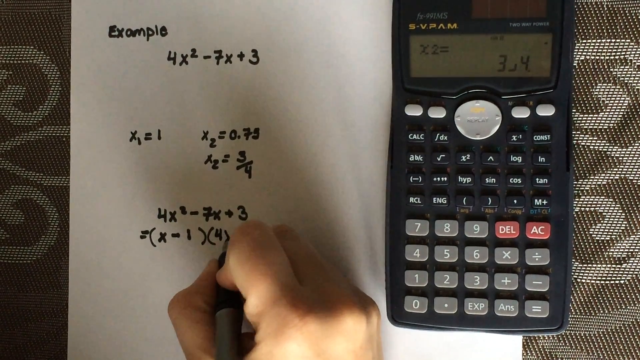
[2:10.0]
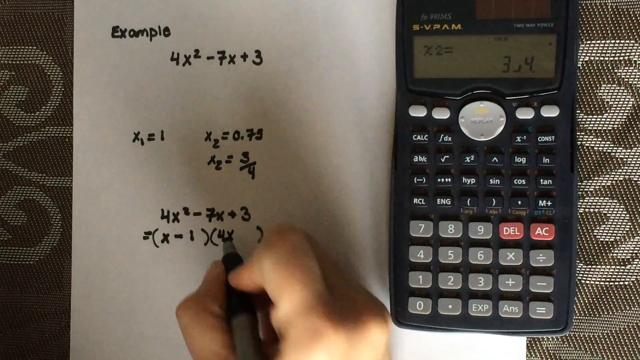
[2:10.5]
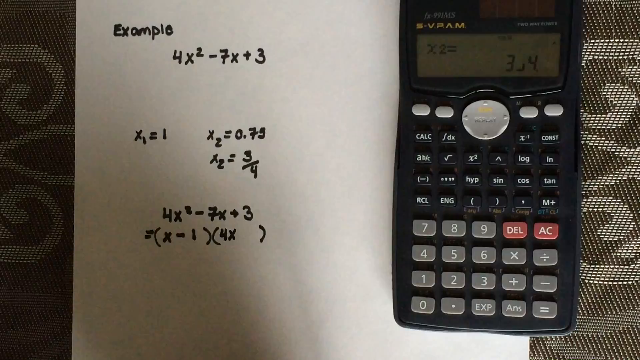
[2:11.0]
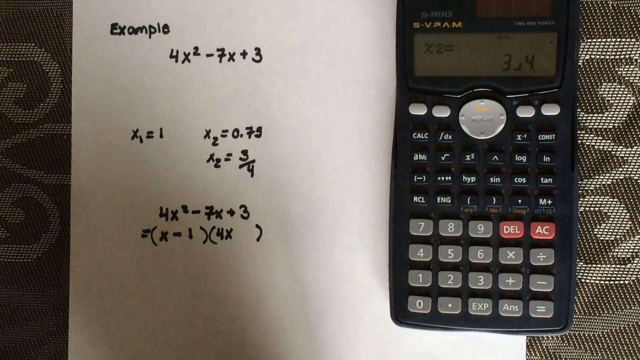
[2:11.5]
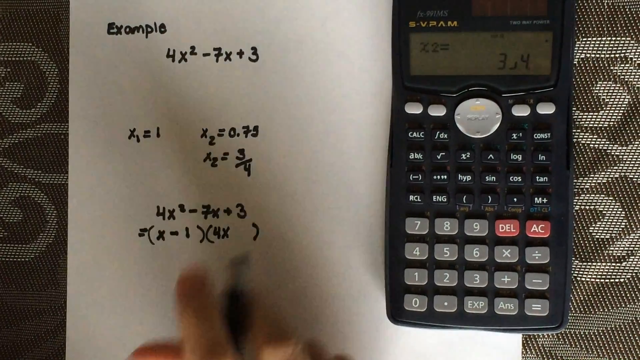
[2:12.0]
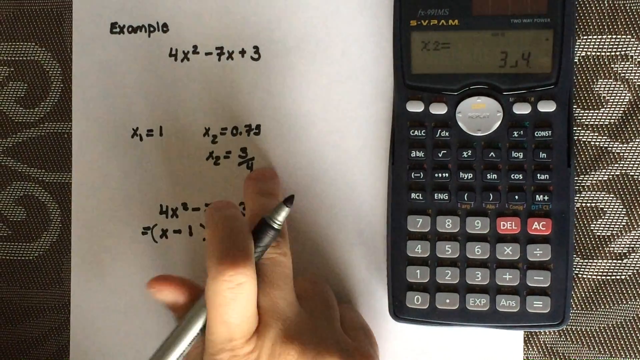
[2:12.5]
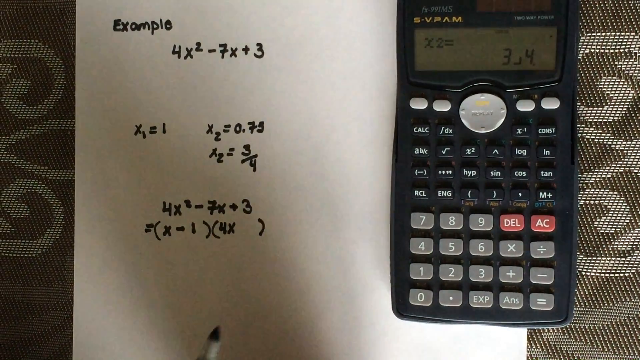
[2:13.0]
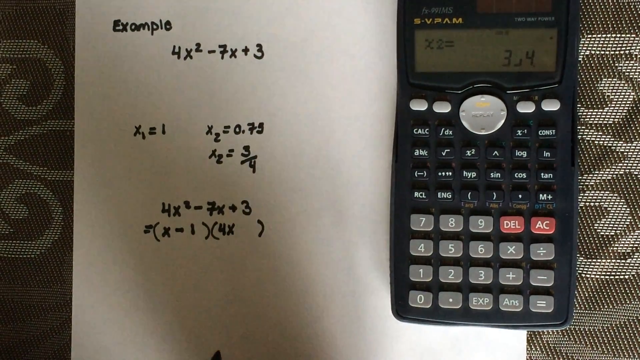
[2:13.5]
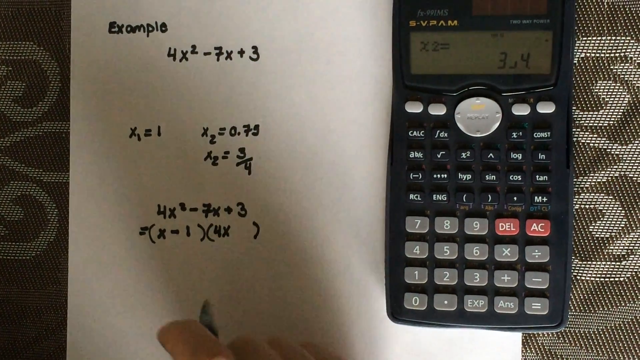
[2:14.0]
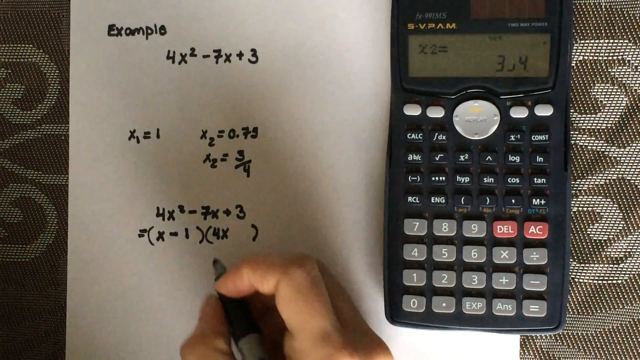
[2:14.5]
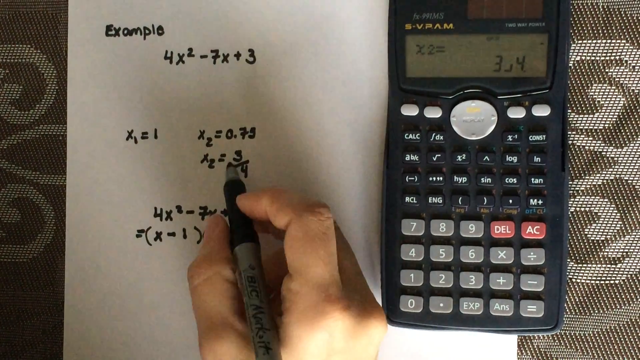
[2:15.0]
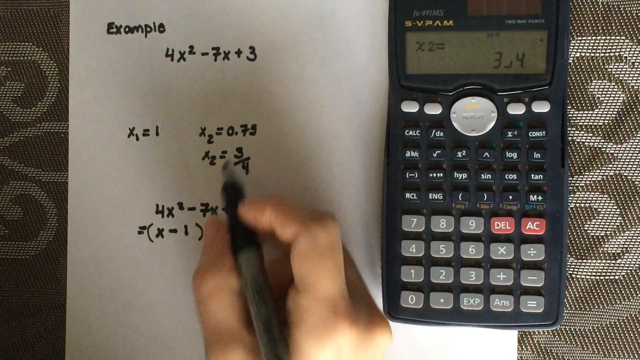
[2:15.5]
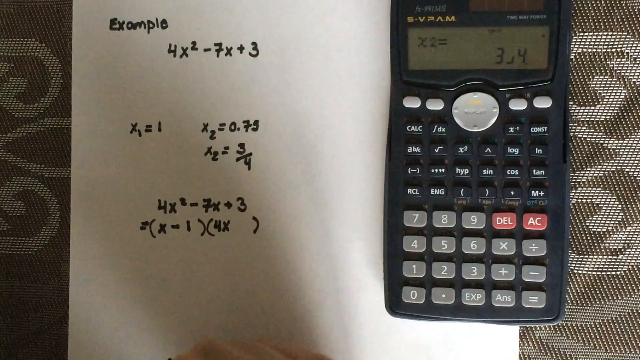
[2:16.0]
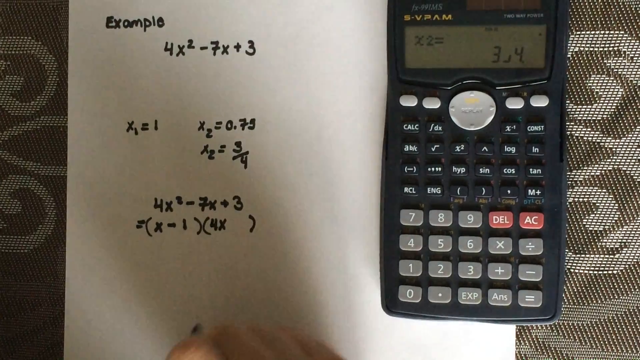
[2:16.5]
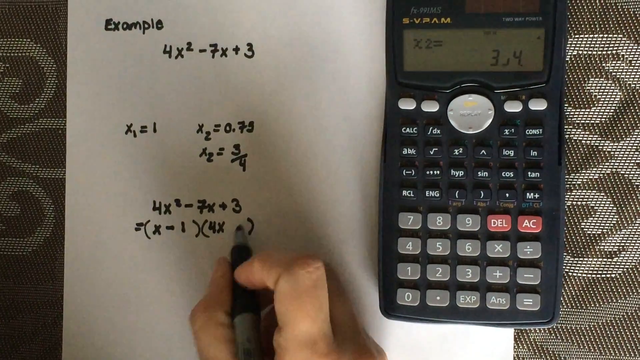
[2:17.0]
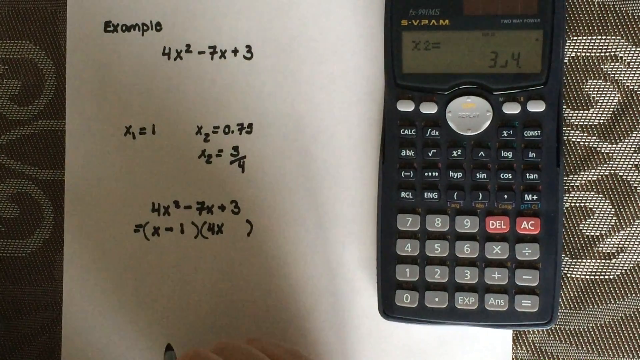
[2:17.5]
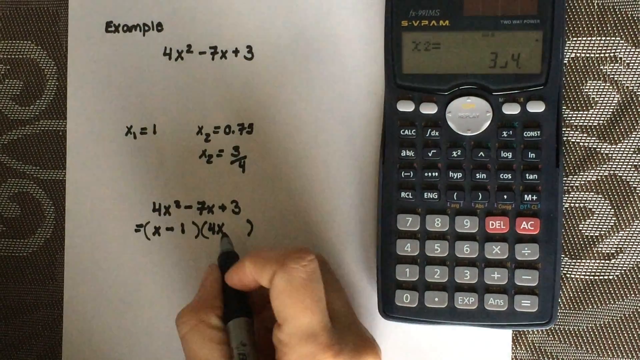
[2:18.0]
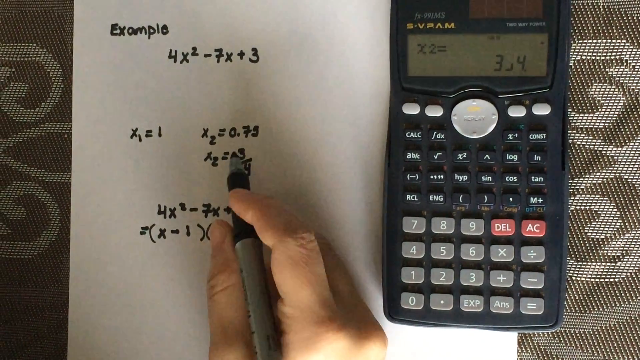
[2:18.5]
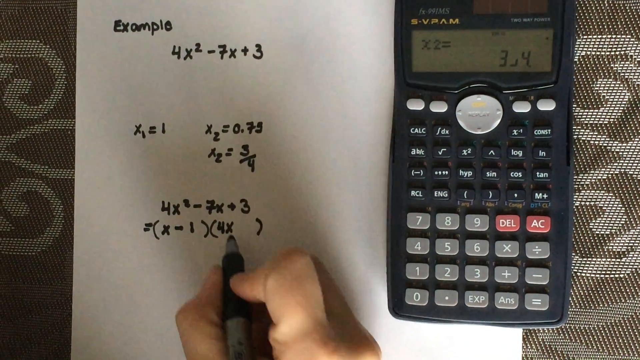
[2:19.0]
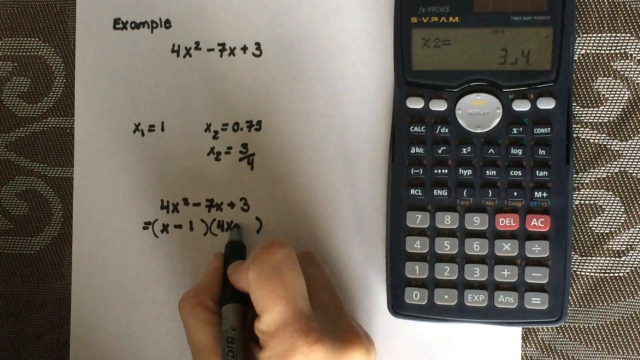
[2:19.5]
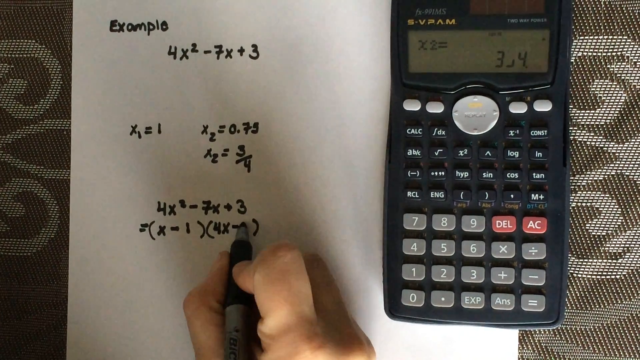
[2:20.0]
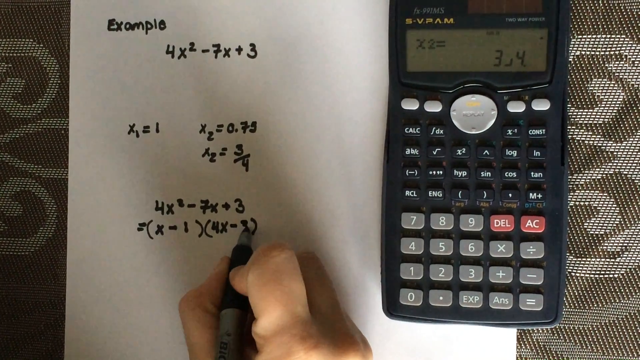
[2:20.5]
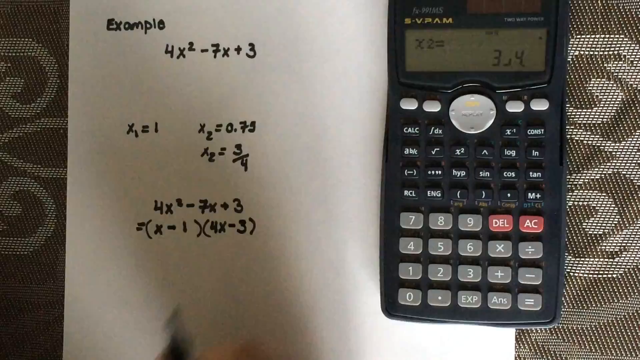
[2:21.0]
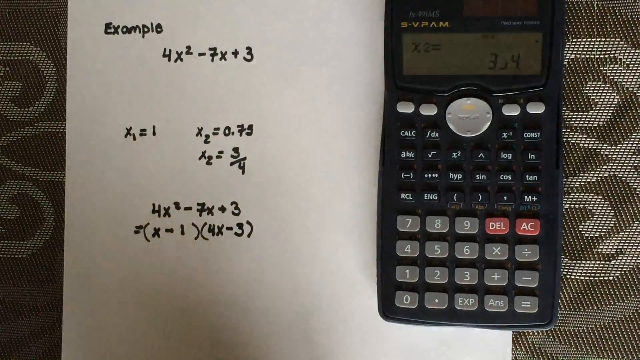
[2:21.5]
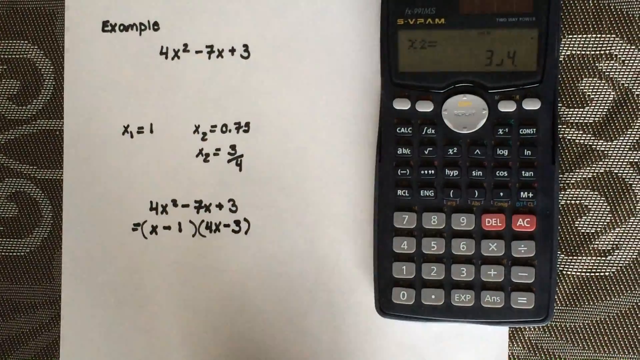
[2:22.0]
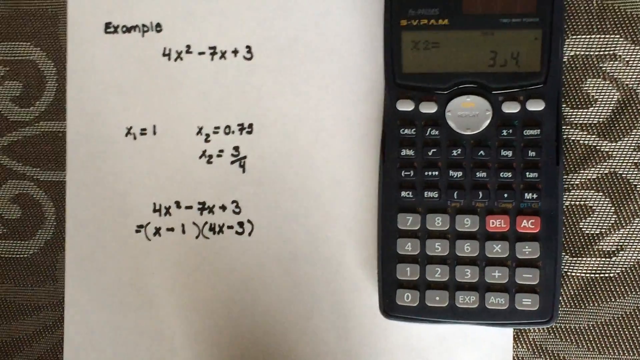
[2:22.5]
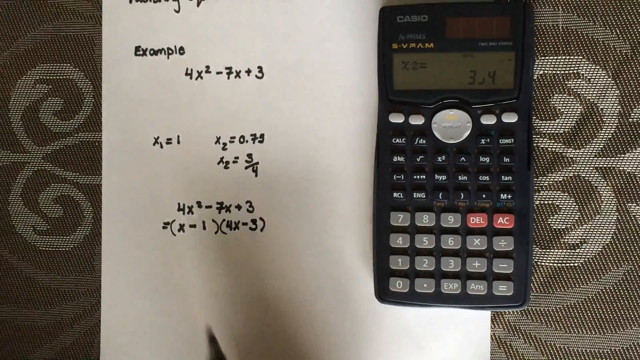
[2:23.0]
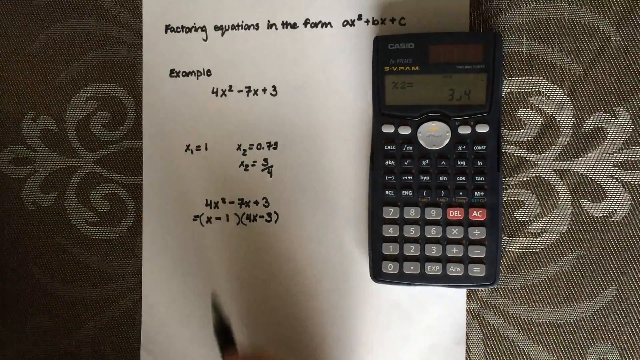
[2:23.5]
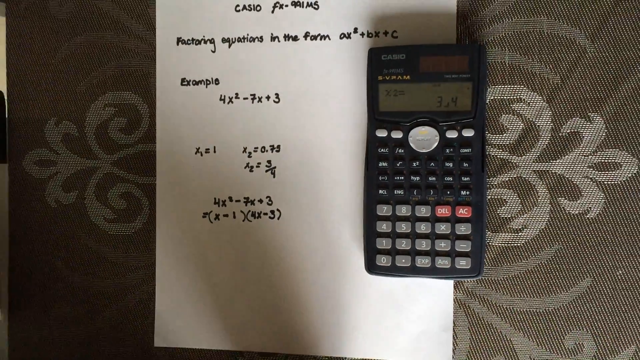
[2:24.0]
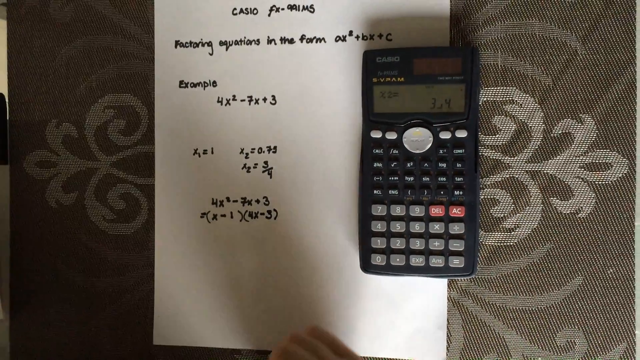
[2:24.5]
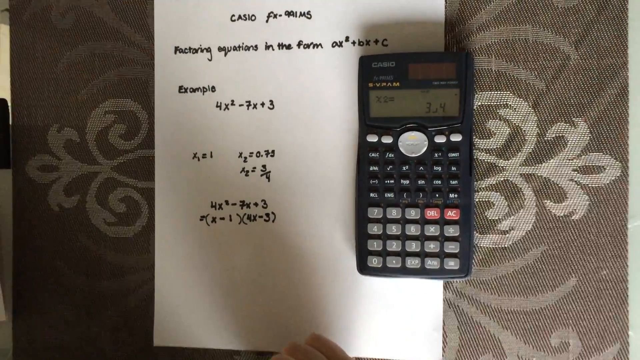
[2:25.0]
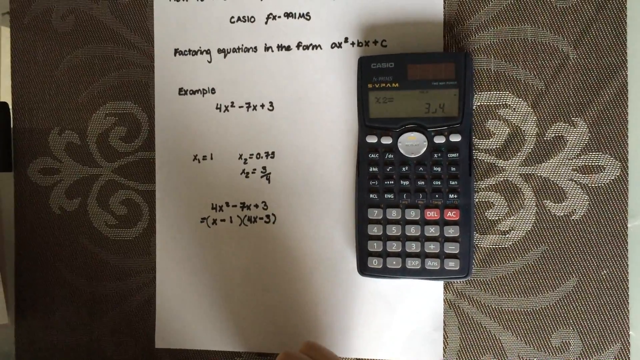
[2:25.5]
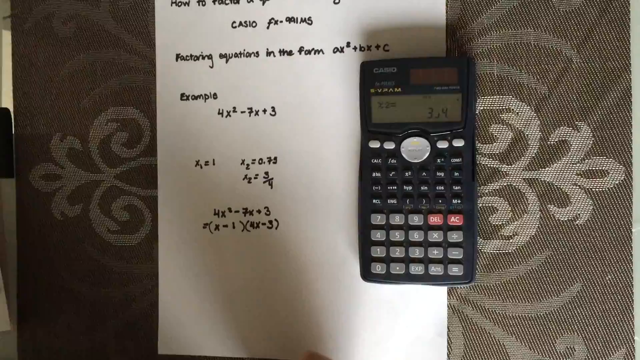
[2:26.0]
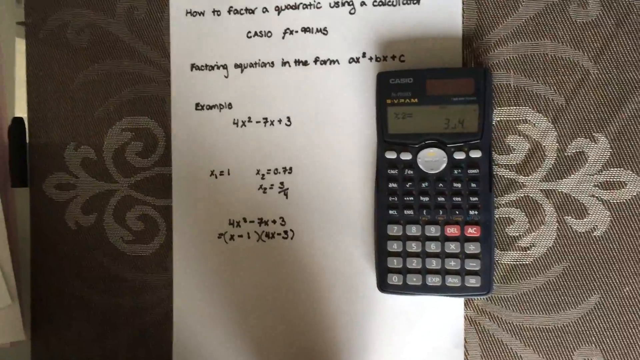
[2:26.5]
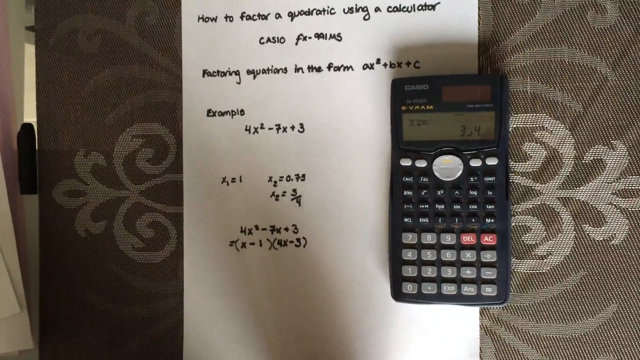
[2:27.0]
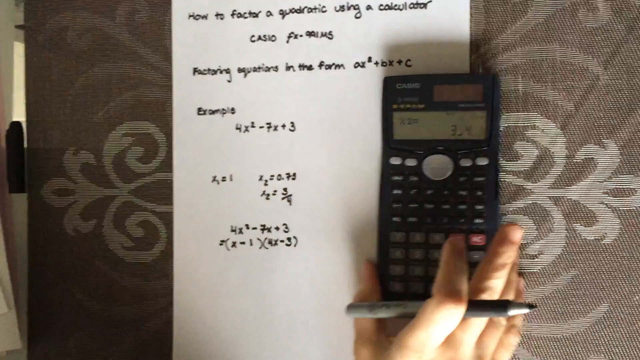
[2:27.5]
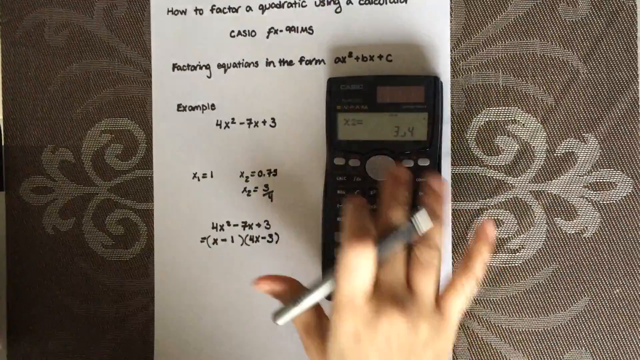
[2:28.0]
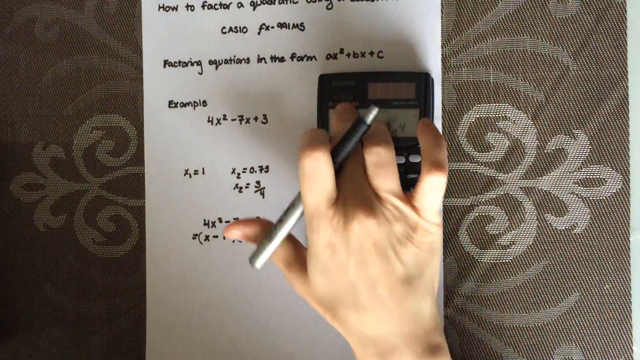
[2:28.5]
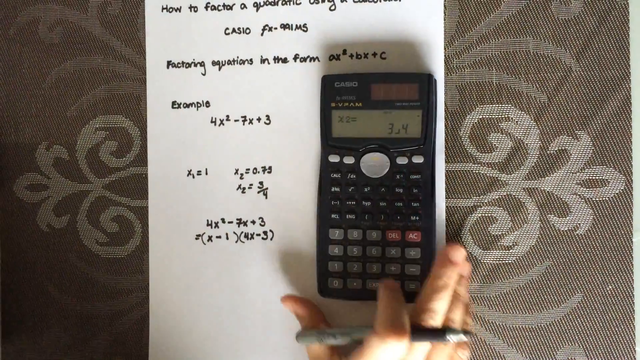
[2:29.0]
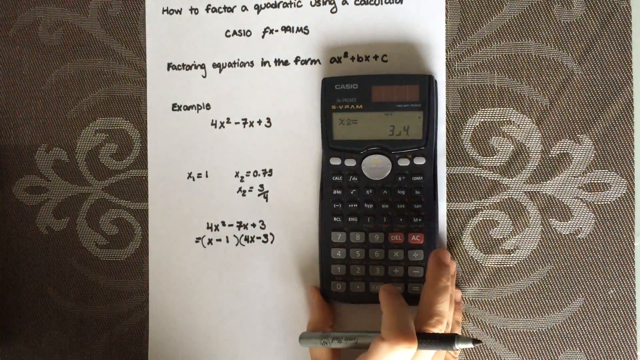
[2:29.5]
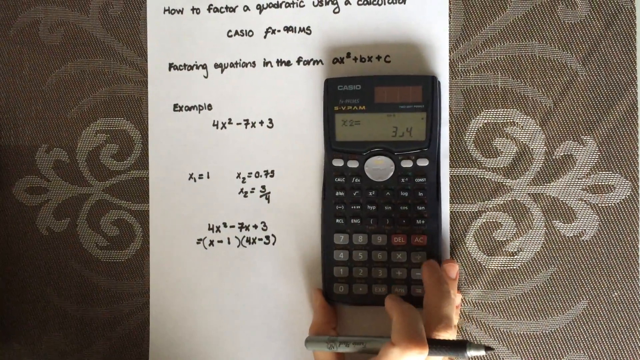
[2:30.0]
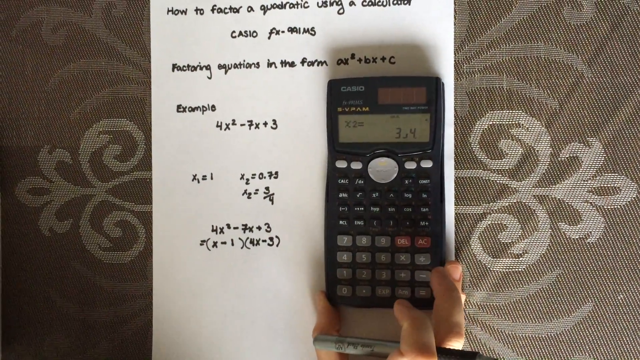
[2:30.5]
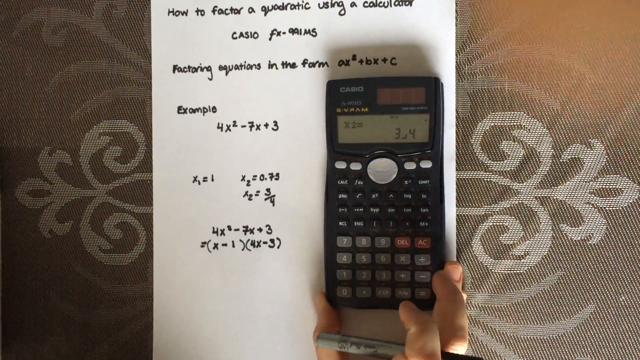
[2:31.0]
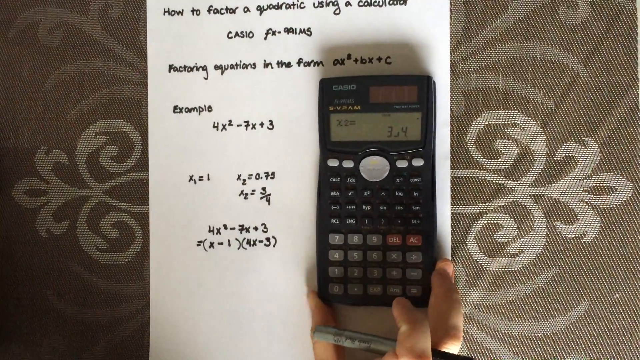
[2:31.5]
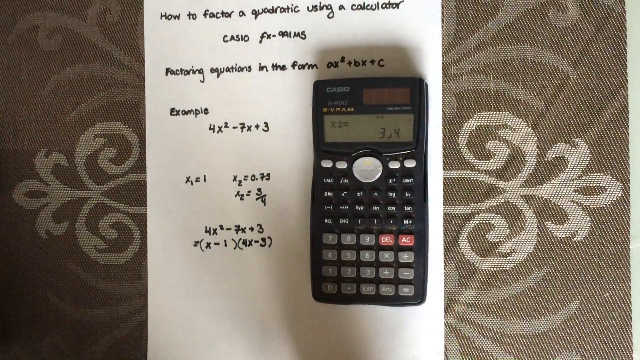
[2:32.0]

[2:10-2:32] The paper shows the example 4x squared minus 7x plus 3, and many other numbers are being written on the blank white sheet with a black Sharpie marker by a white hand. Behind the paper is a sofa-like material with a design, and right next to the paper is a black calculator with buttons. The scene is lit well enough to see everything clearly, with the light likely coming from the right-hand side.